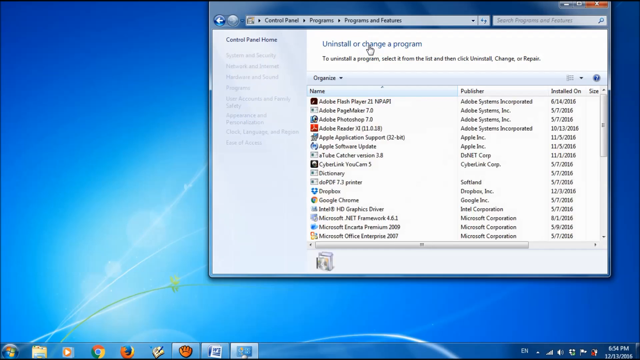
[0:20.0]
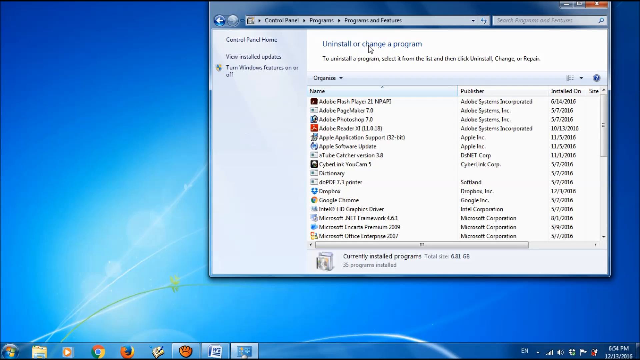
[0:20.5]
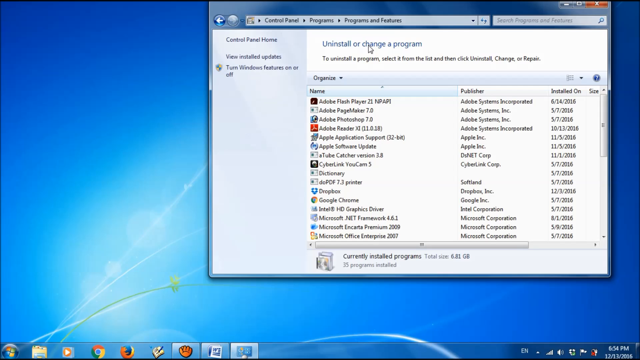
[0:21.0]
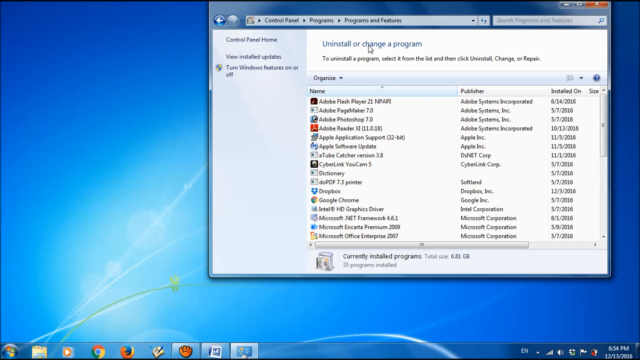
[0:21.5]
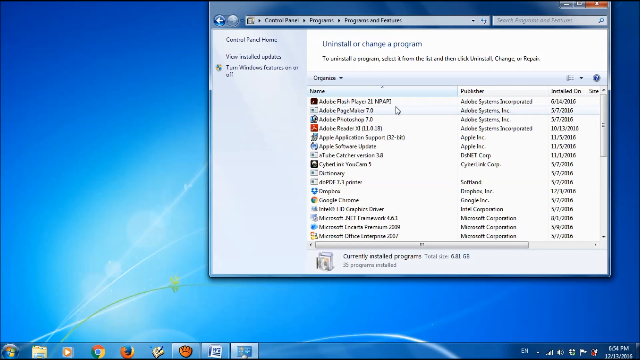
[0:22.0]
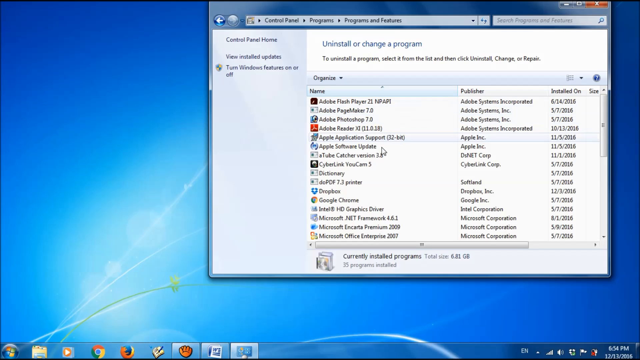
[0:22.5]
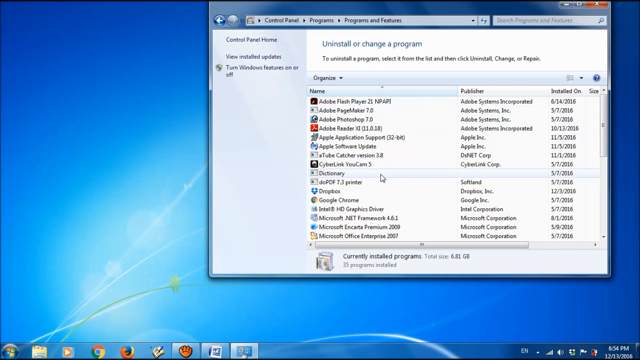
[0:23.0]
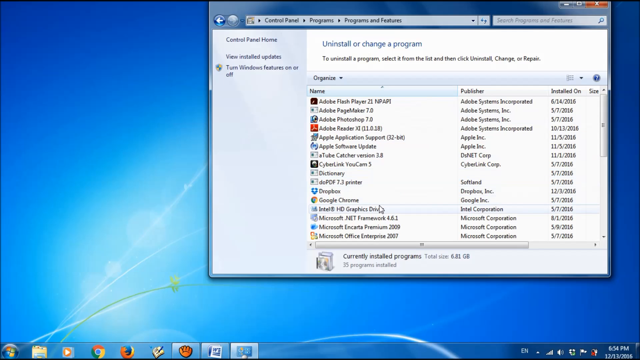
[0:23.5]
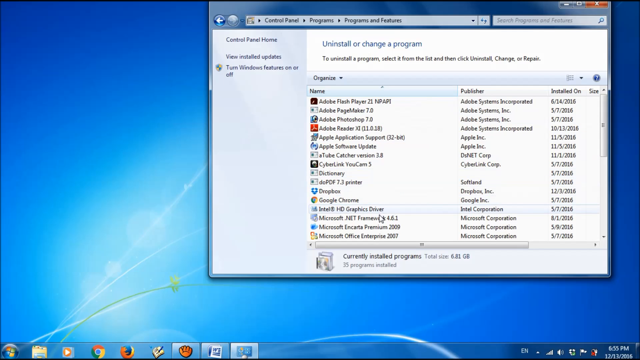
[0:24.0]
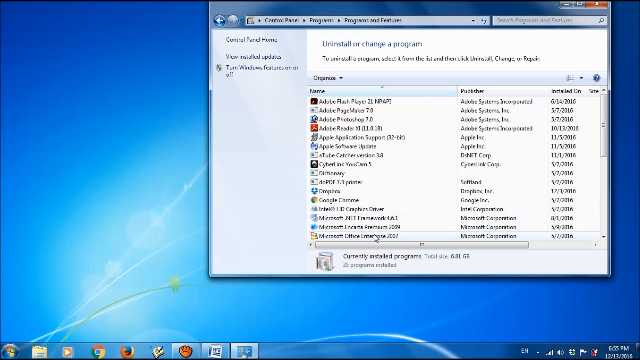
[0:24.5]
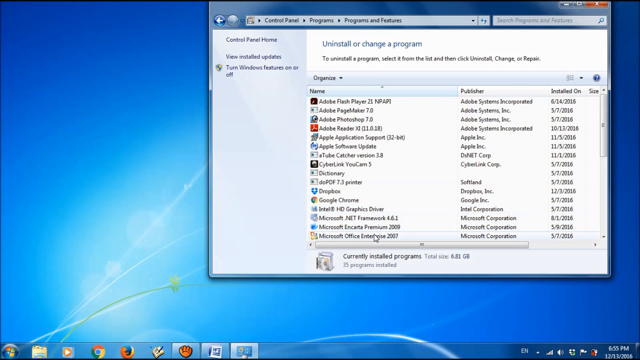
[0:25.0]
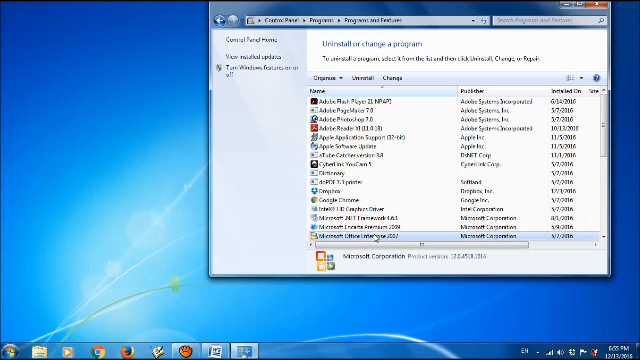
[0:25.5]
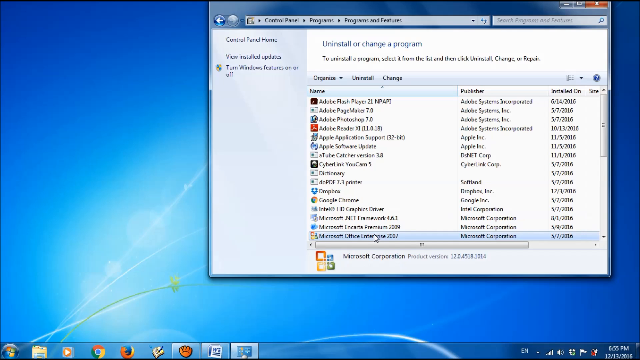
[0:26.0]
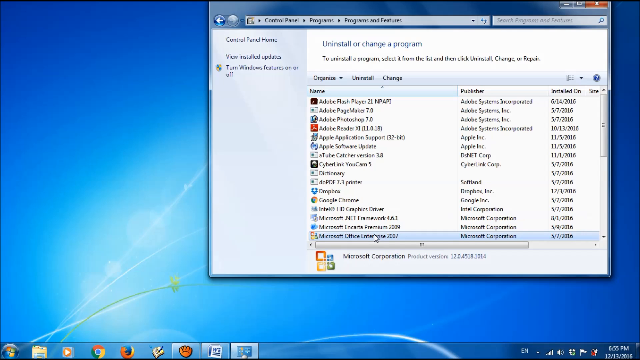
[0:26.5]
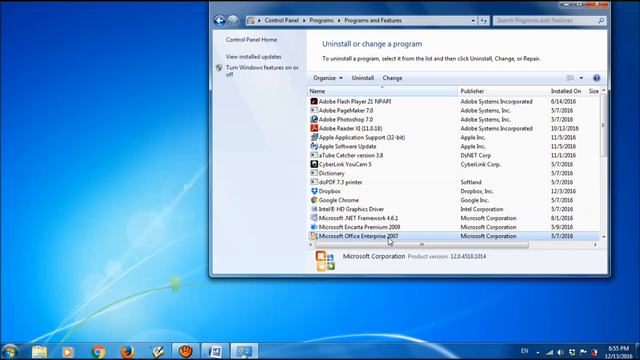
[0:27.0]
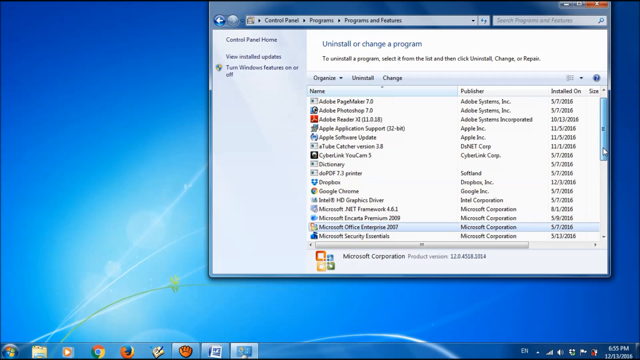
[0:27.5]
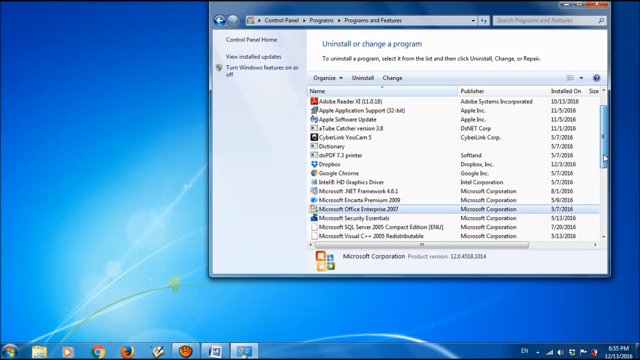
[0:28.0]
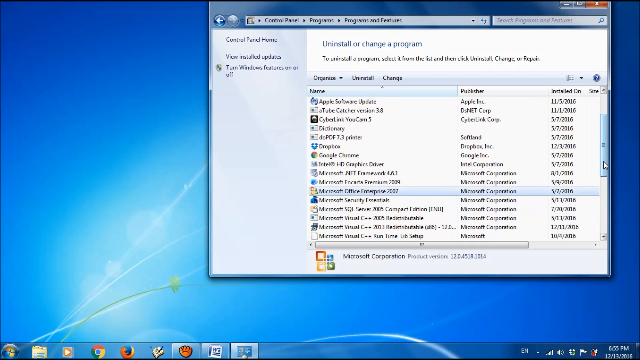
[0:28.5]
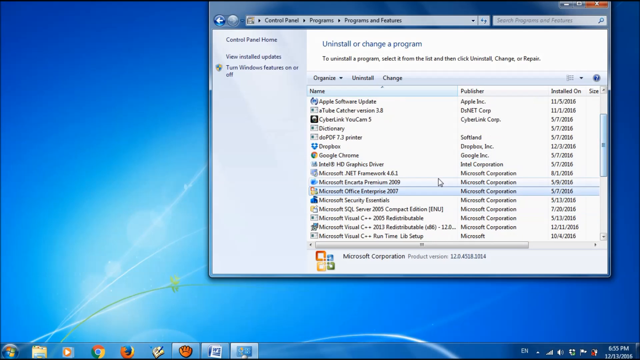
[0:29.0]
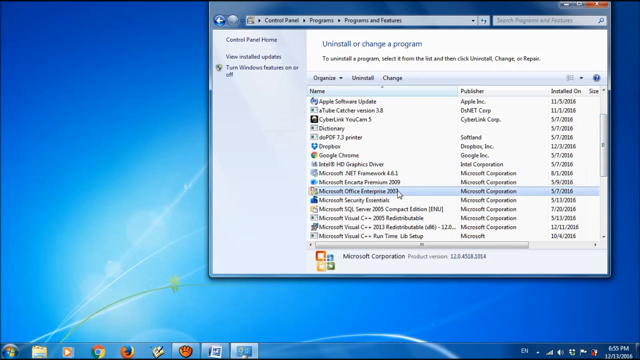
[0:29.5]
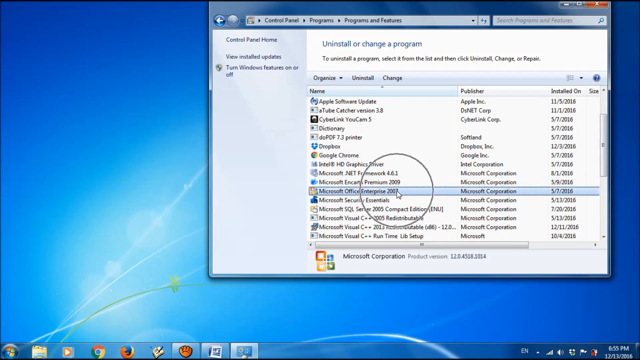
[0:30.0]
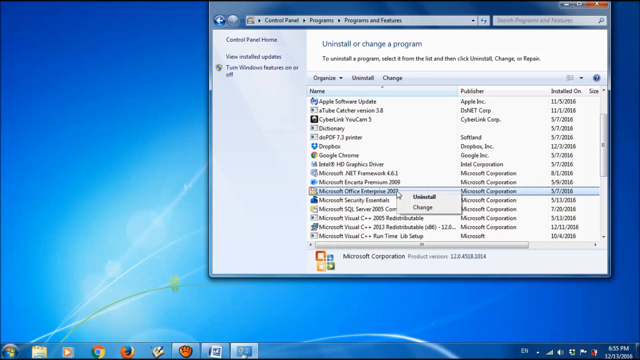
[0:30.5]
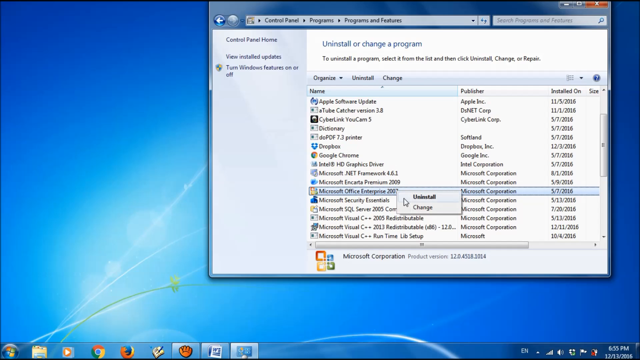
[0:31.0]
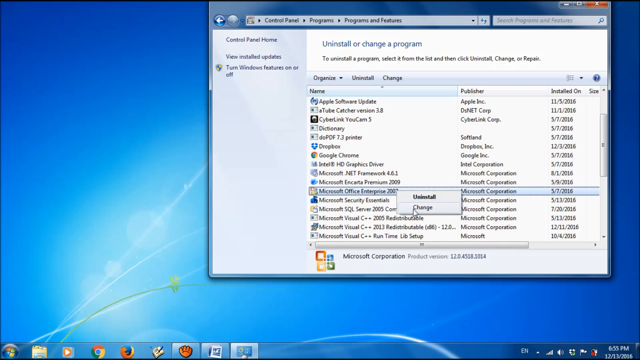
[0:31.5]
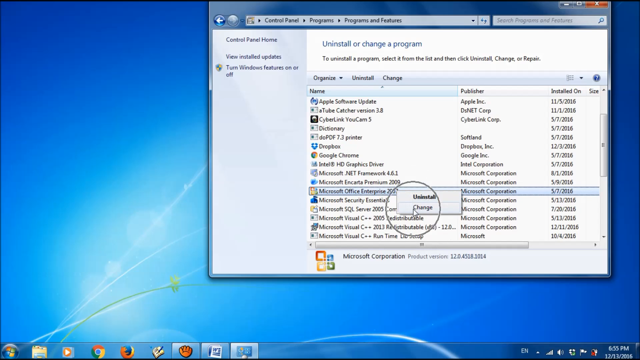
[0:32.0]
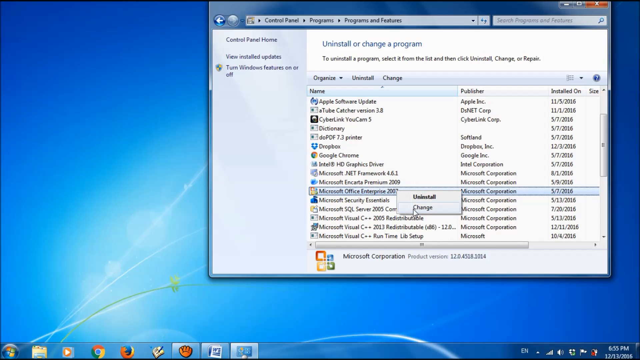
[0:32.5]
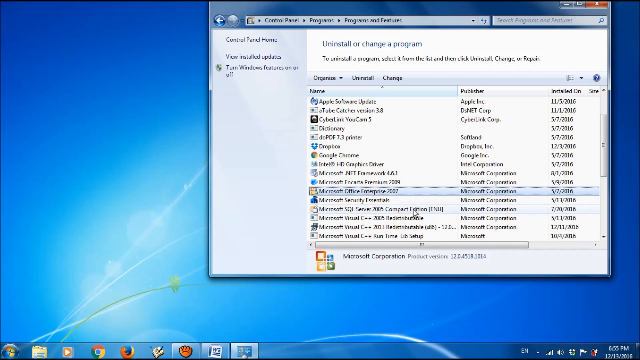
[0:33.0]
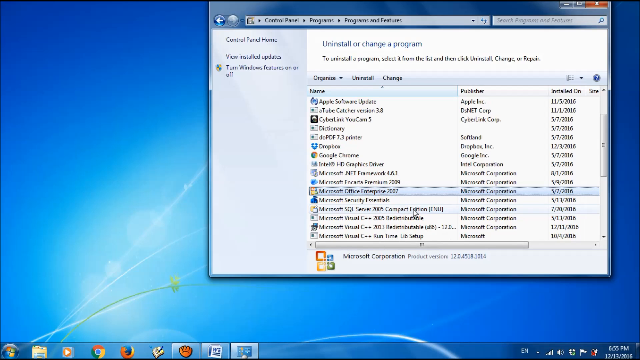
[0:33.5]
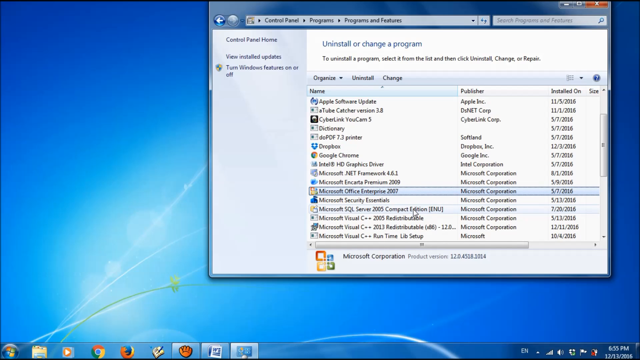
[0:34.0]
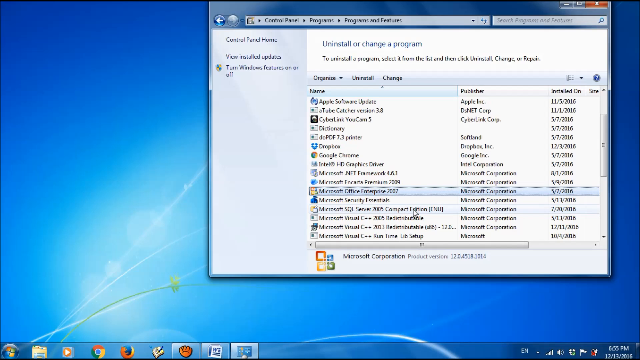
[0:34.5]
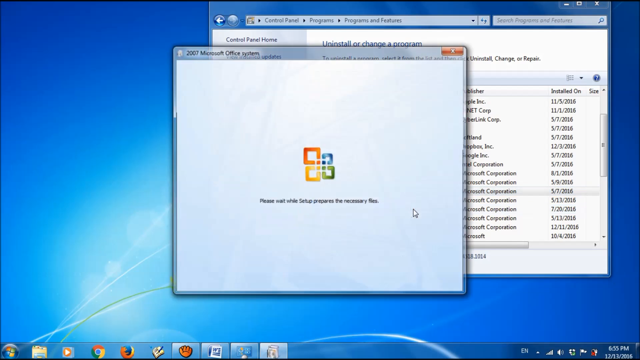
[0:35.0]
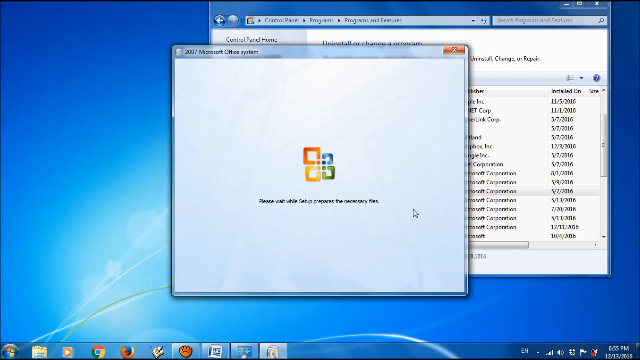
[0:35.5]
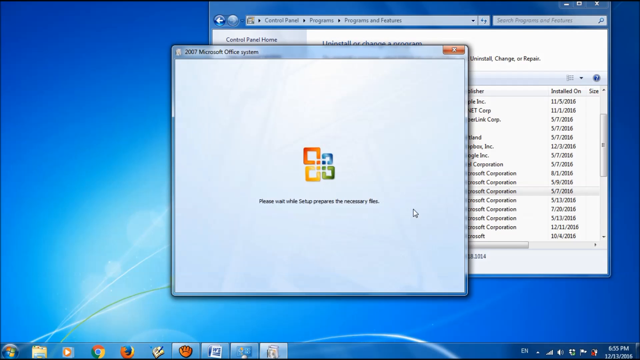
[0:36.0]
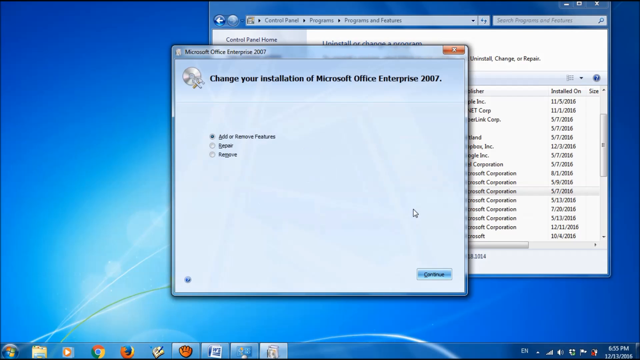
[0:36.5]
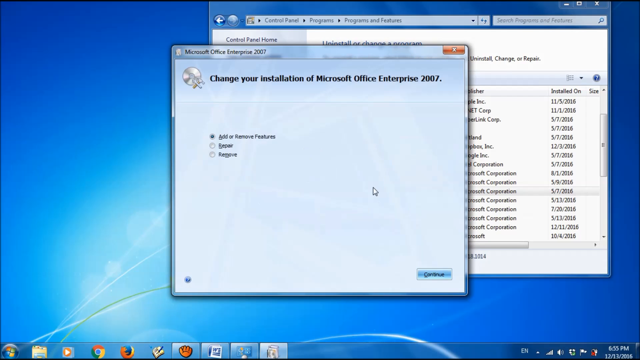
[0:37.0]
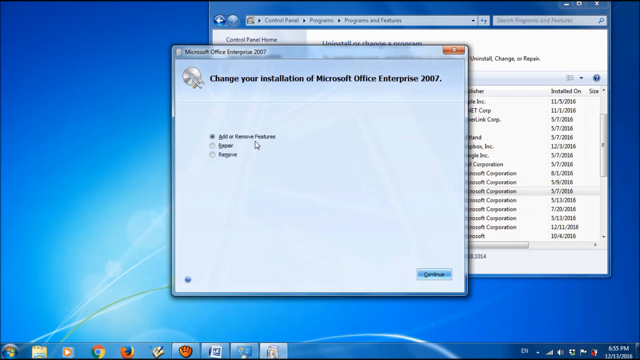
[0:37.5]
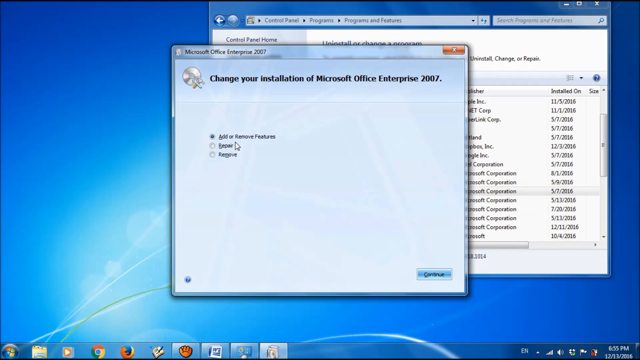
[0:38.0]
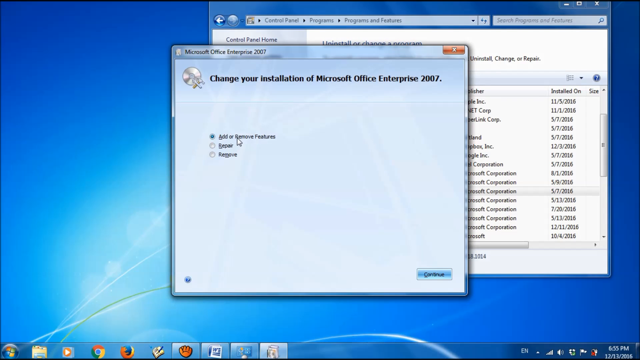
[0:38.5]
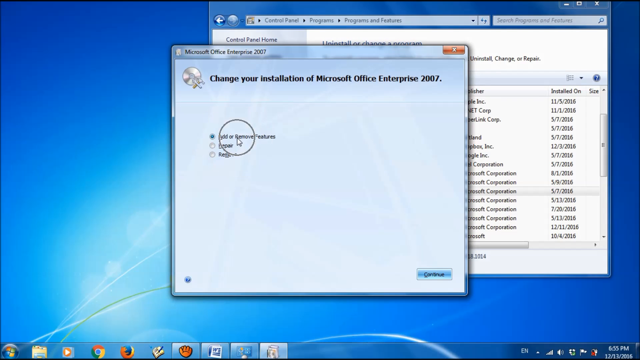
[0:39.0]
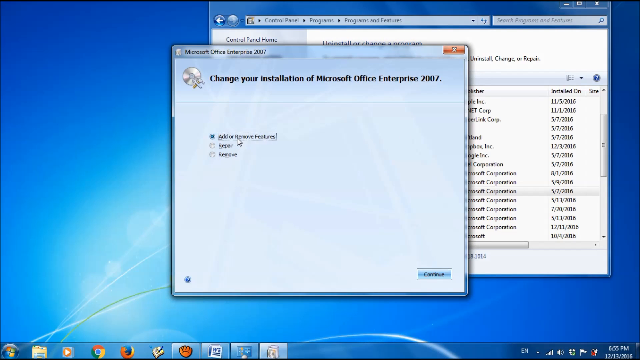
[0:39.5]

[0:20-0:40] The Programs and Features page is open, and the mouse moves over a link at the top that says "Uninstall or change a program." Below is a list of programs with a Name column, a Publisher column and an Install Date column. The mouse moves down through the programs to one called Microsoft Office Enterprise 2007, which is selected, and the page scrolls further down. Microsoft Office Enterprise is clicked, apparently with a right-click, and the option to uninstall or change appears; the cursor moves to change and clicks it. A screen comes up that says "2007 Microsoft Office System" and "Change your installation of Microsoft Office Enterprise 2007," with the options add or remove features, repair, or remove. Add or remove features is selected by default and appears to be clicked, and then continue is clicked.